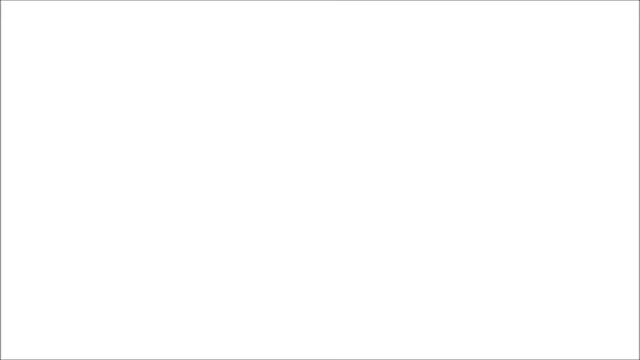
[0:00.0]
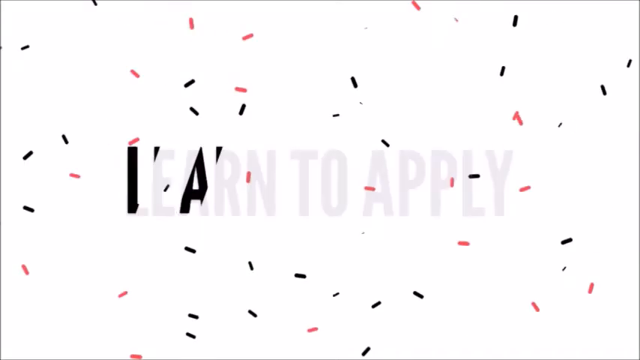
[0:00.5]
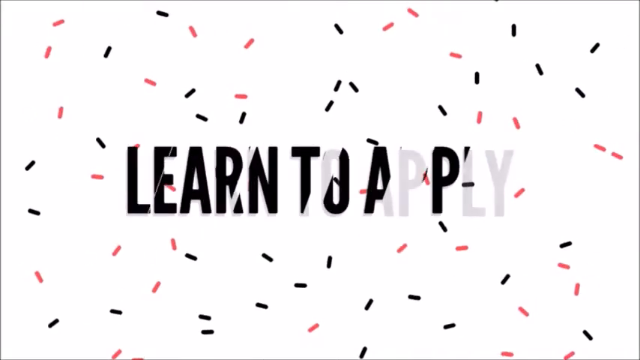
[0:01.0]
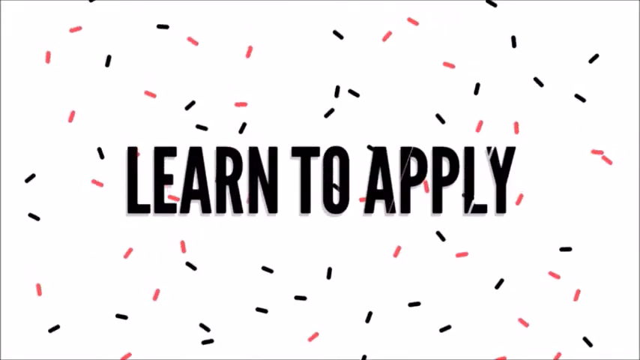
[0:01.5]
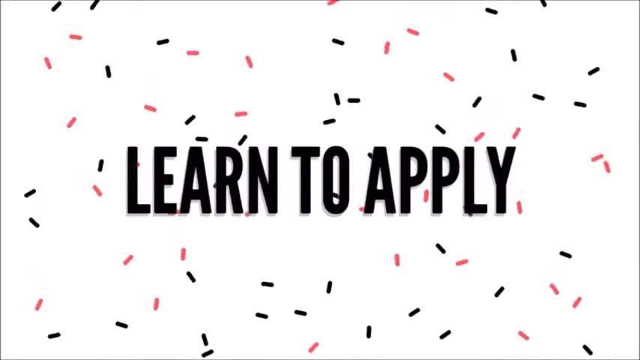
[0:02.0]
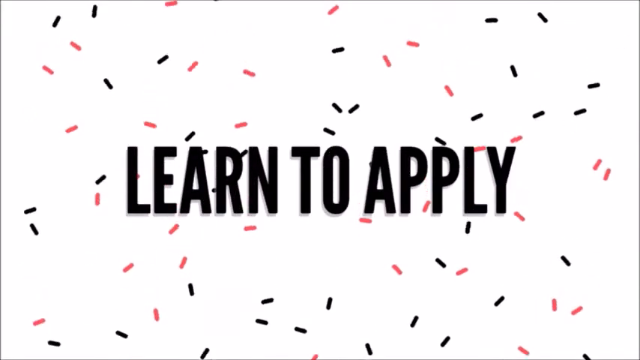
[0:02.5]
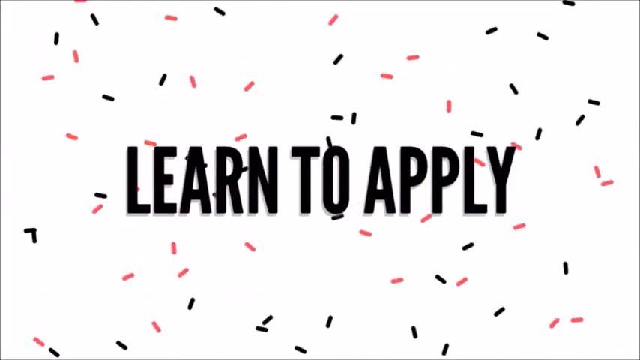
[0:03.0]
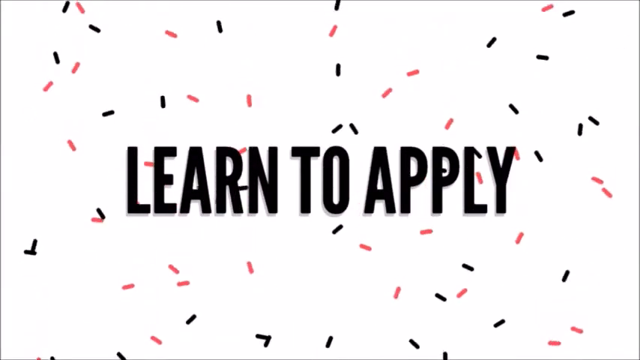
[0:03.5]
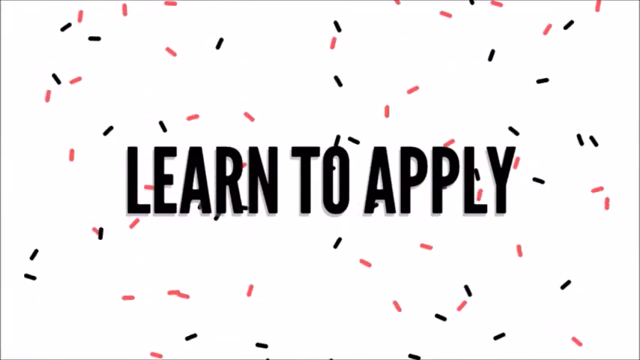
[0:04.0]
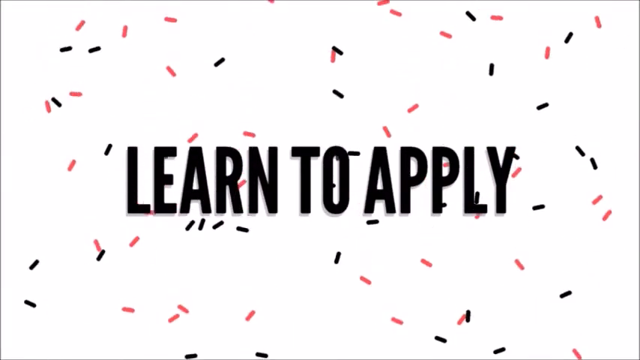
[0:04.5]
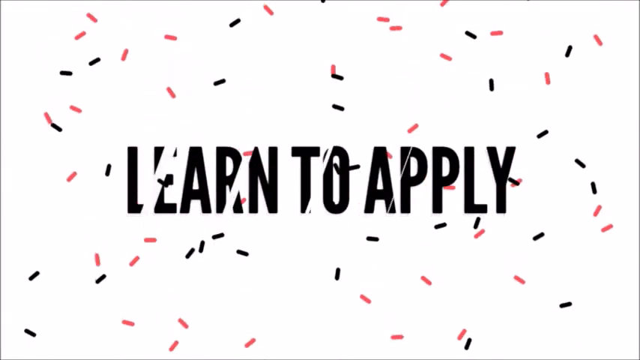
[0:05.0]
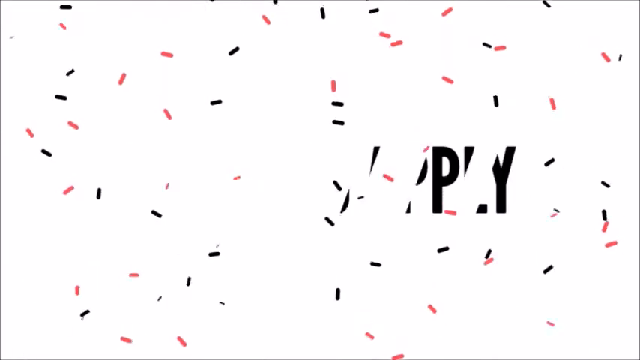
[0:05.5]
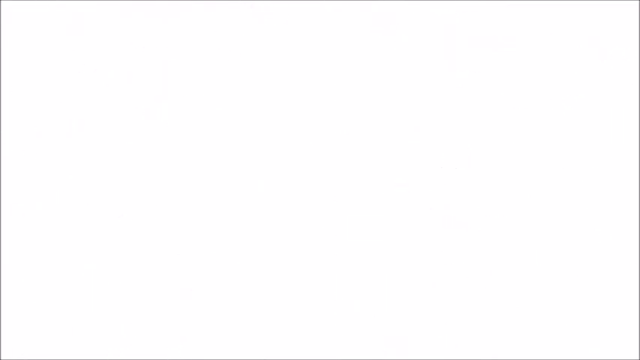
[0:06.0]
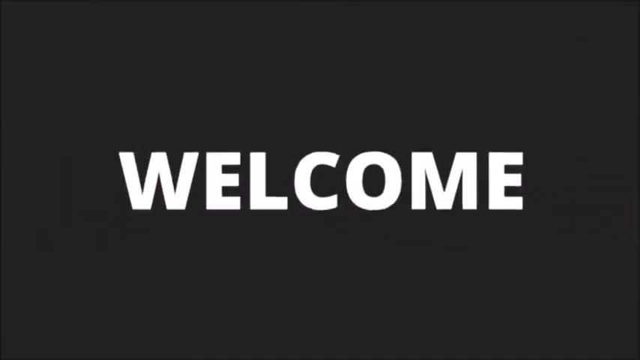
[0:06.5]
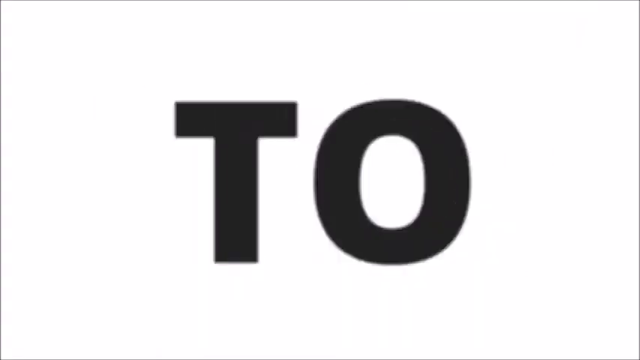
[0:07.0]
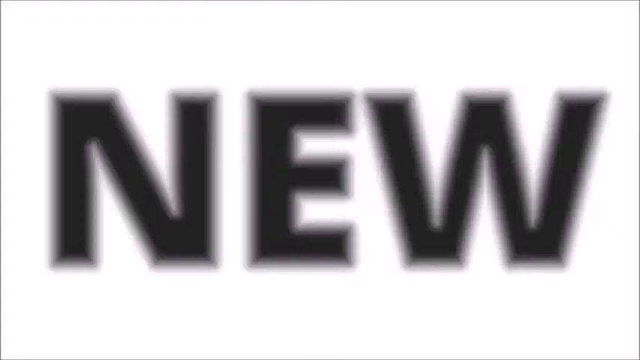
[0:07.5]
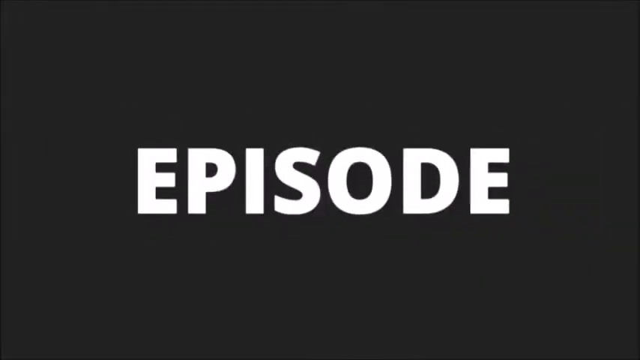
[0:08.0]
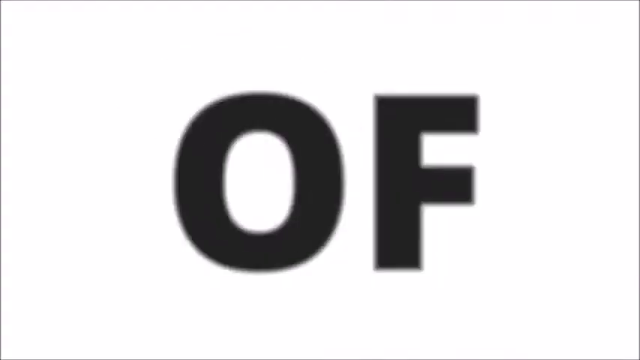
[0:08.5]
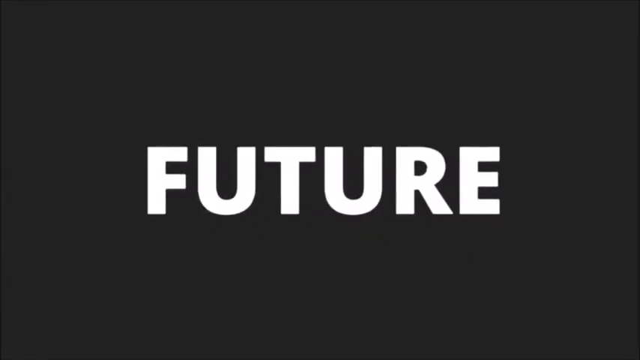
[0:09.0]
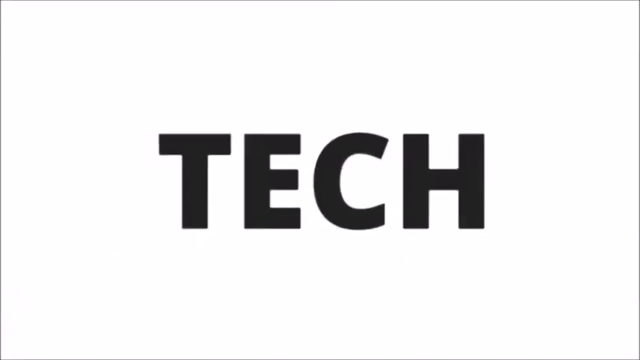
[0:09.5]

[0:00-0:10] A white screen appears, and text slowly comes up, accompanied by some confetti as part of the intro. The confetti then slowly falls, and the "learn to apply" text is black. After that, a series of big words flash up on screen one after another in order: "welcome to a new episode of future tech". Each word starts out really big and gets a little smaller as it zooms out, and each shows for less than a second, so the sequence is very fast.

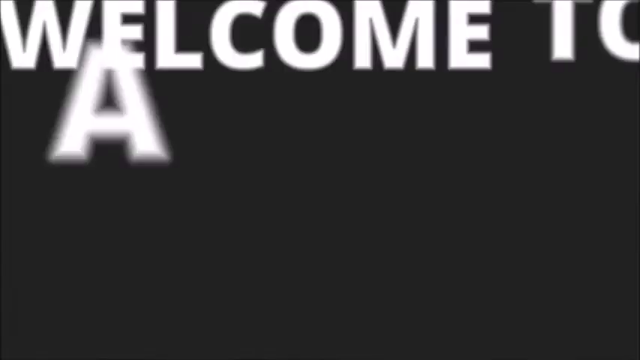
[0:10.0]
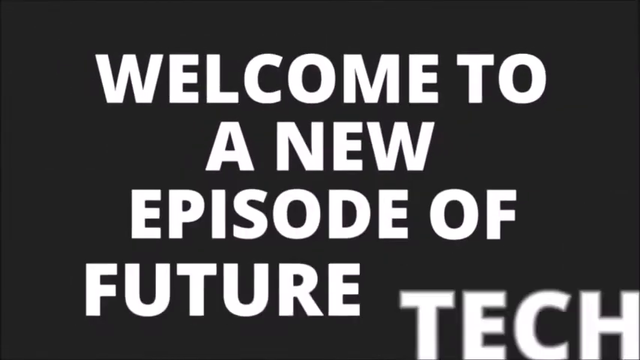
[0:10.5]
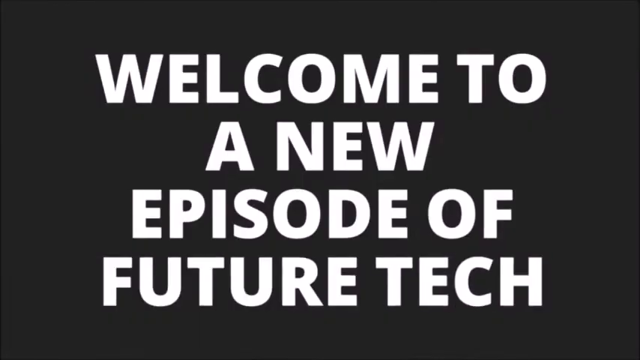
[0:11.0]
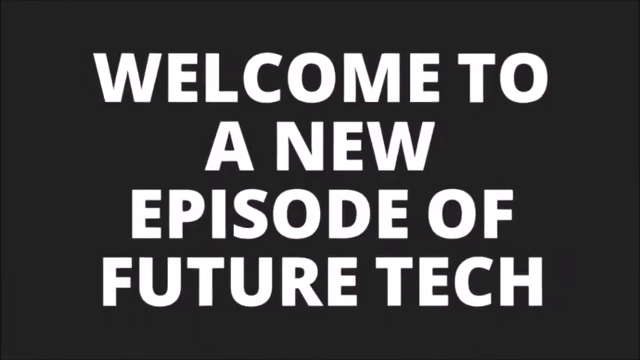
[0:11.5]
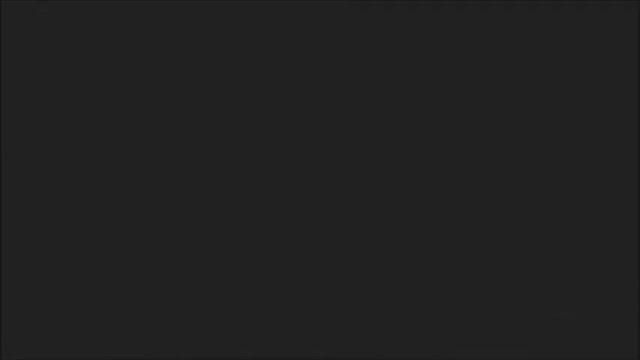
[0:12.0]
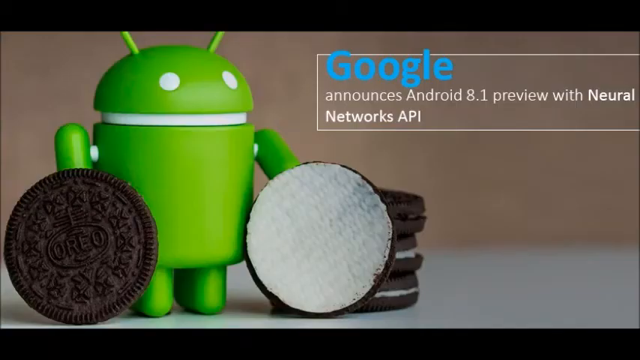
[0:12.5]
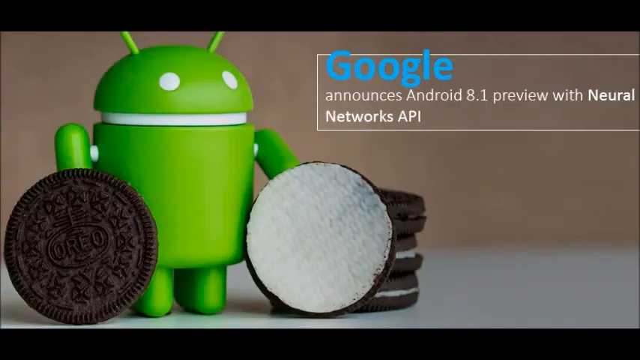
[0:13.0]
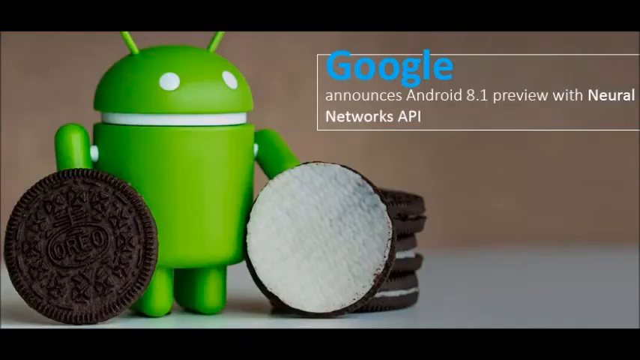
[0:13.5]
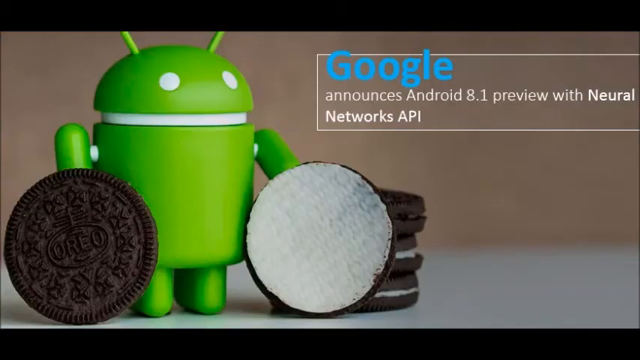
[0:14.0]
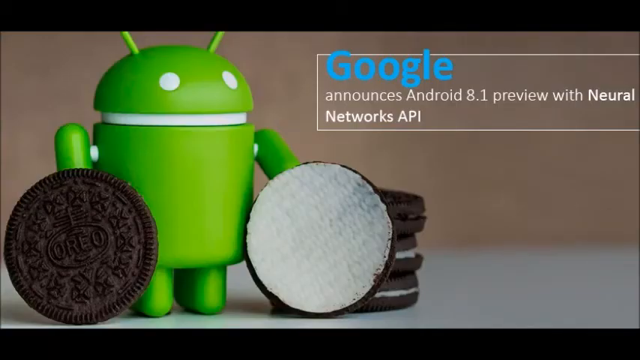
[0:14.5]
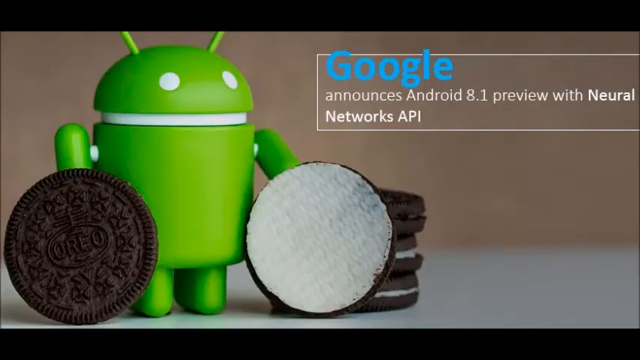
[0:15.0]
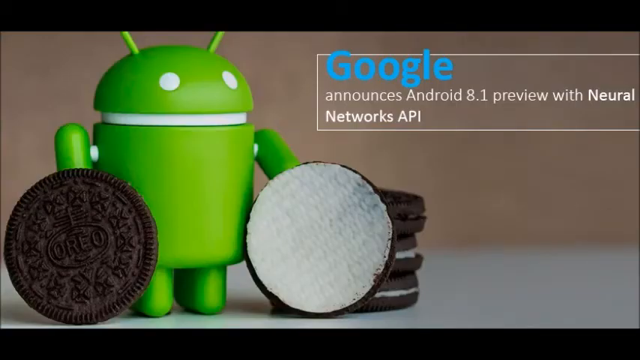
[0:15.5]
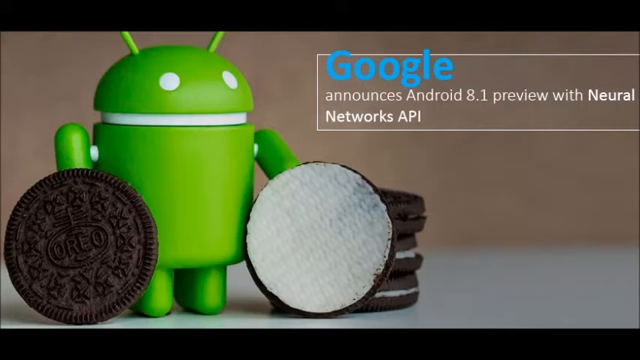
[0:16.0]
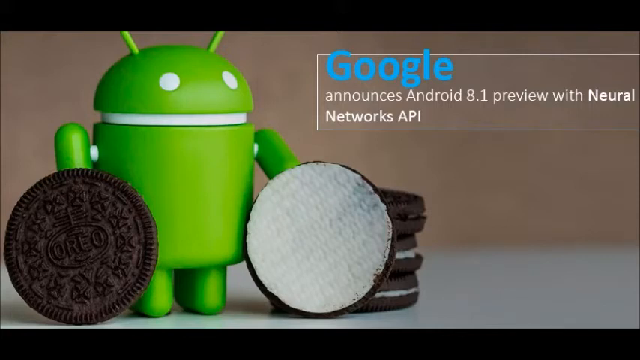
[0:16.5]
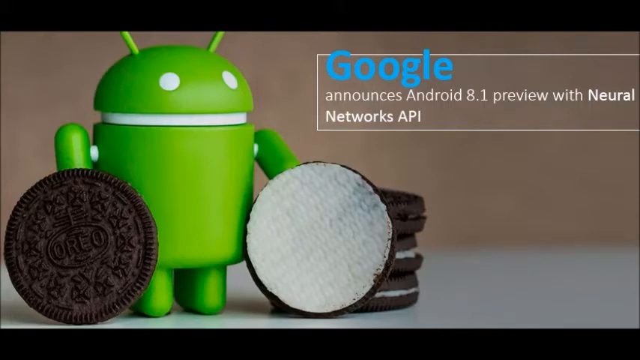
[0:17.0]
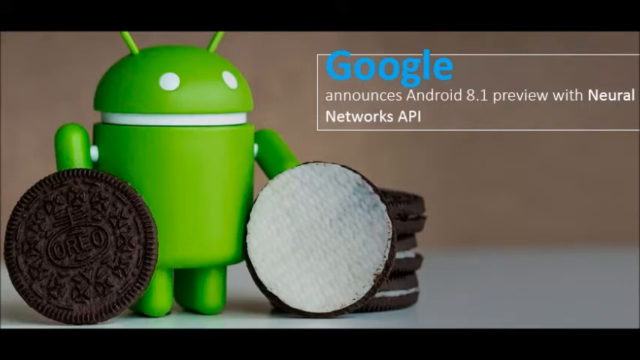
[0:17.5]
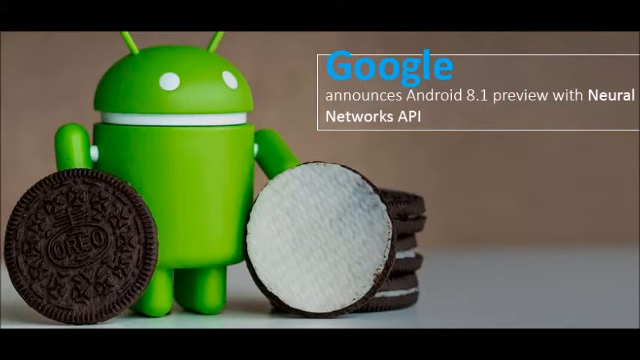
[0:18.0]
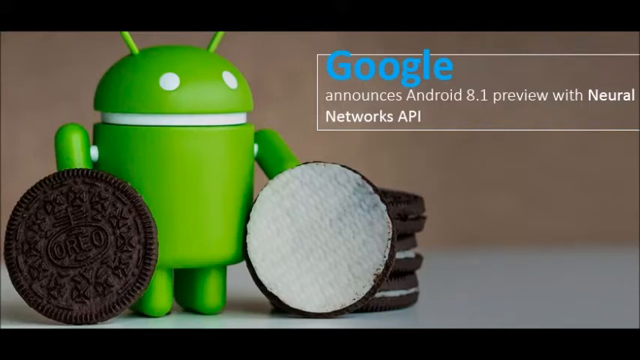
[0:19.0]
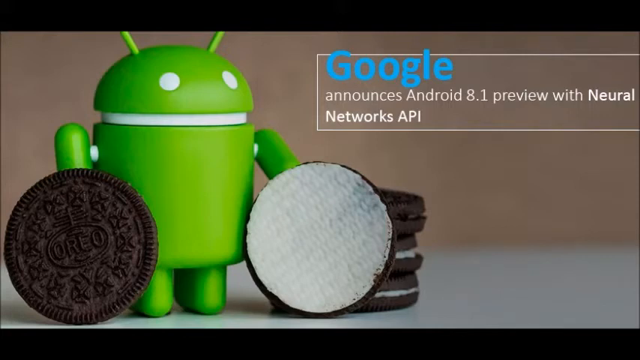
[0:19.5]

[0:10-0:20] The big words that popped up one after another are now all on screen together, reading in full "welcome to a new episode of future tech". Next comes a picture of an Android avatar, the green alien-looking figure based on the phones. It is surrounded by what looks to be Oreos, with the top of an Oreo on the right and the bottom of an Oreo on the left, at its left arm.